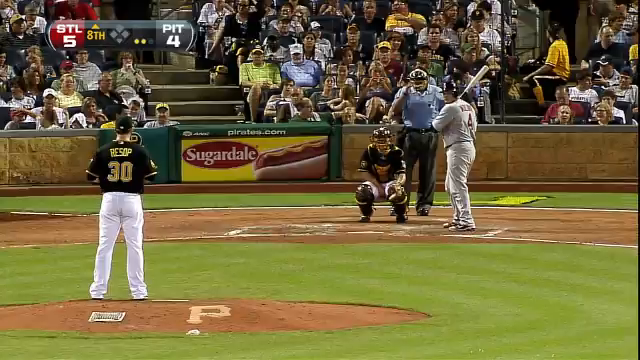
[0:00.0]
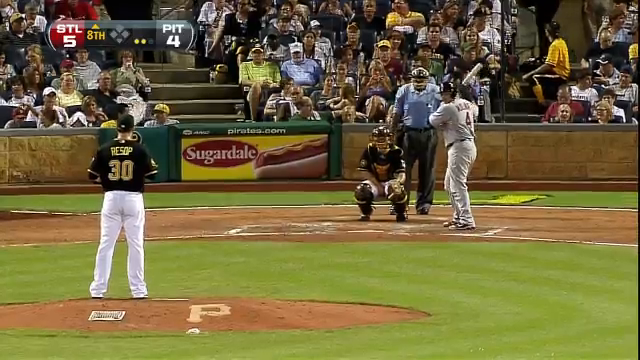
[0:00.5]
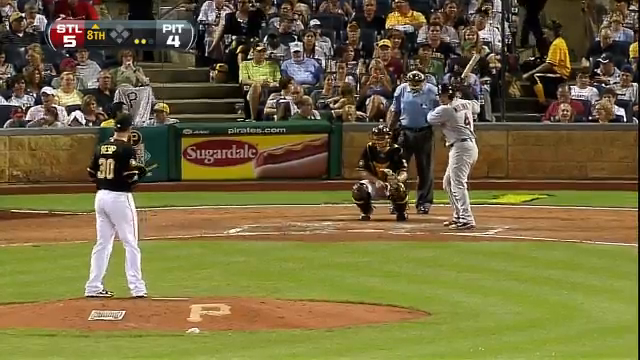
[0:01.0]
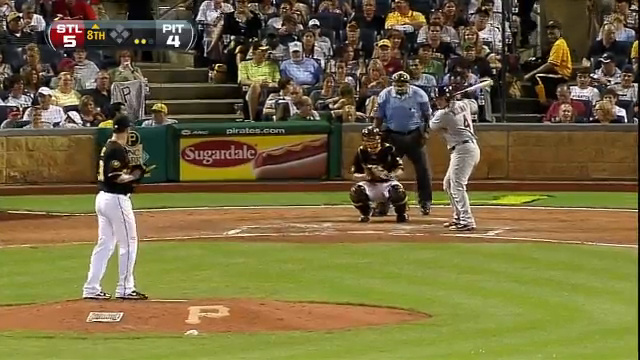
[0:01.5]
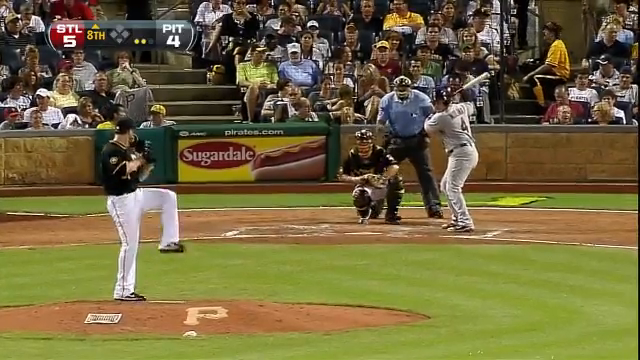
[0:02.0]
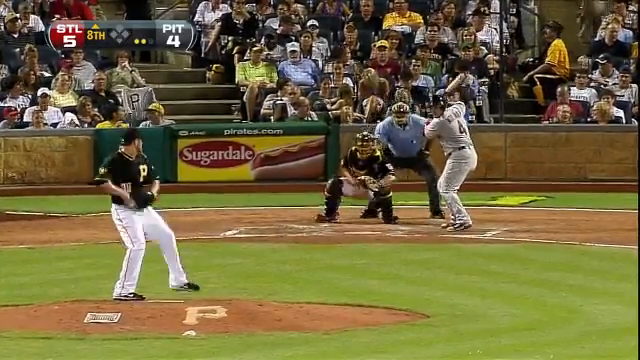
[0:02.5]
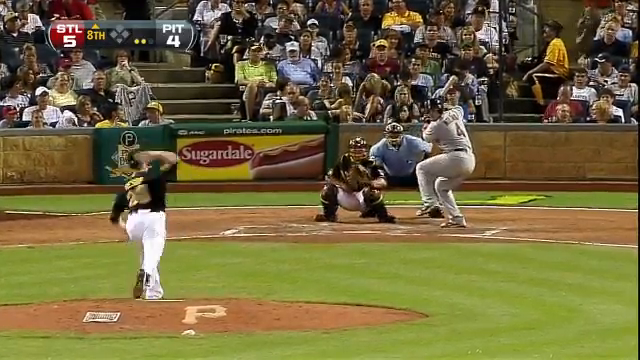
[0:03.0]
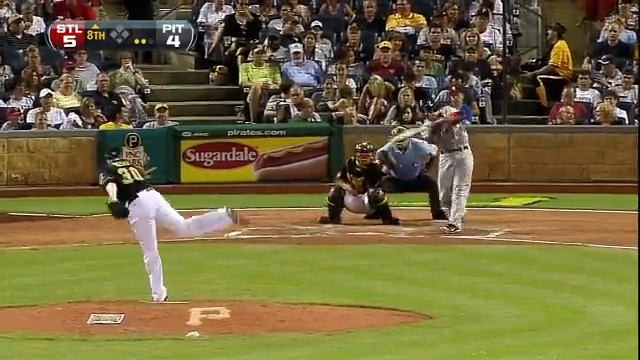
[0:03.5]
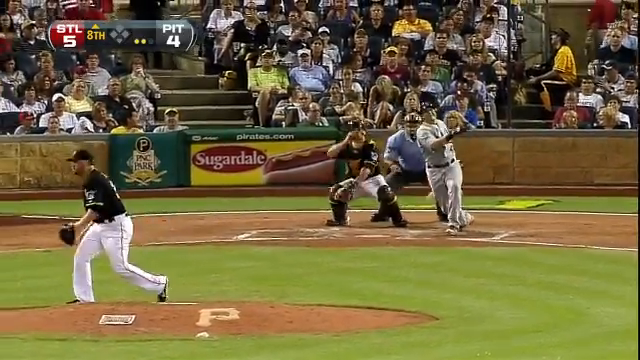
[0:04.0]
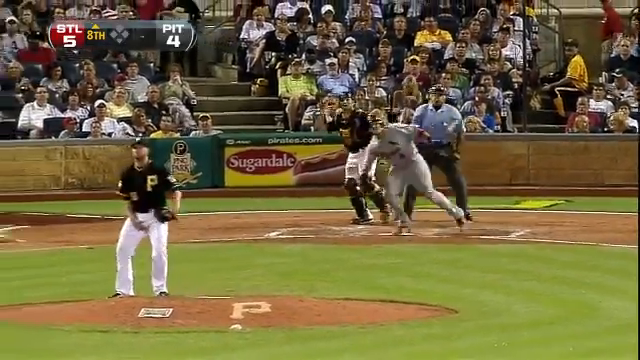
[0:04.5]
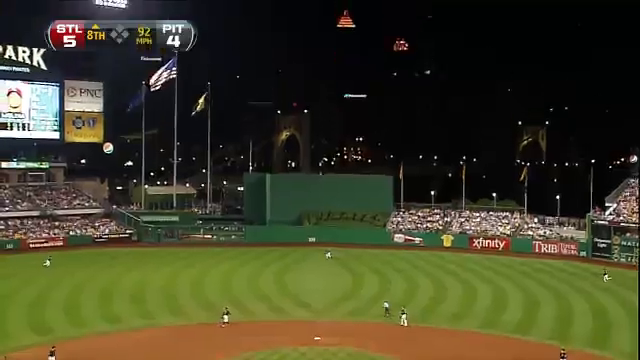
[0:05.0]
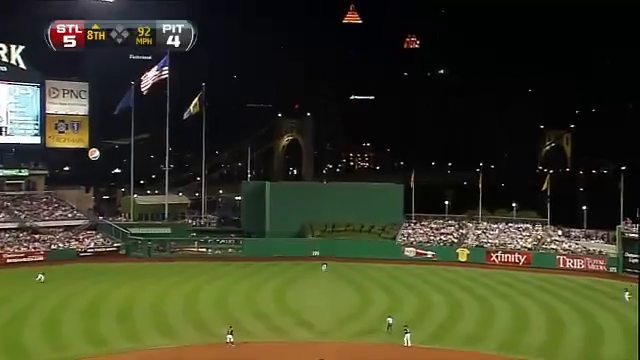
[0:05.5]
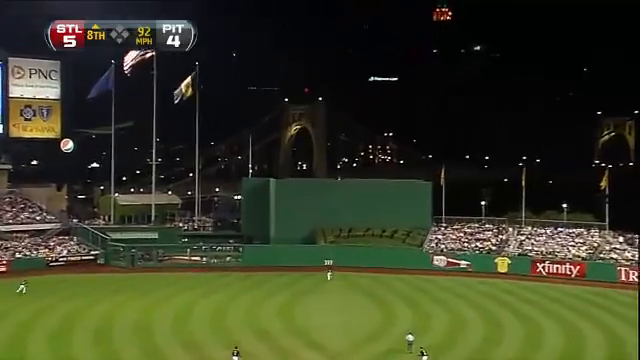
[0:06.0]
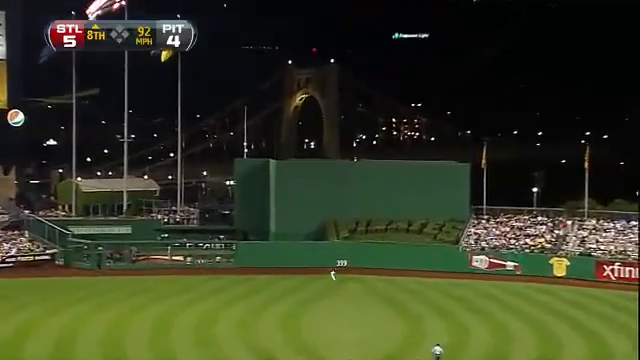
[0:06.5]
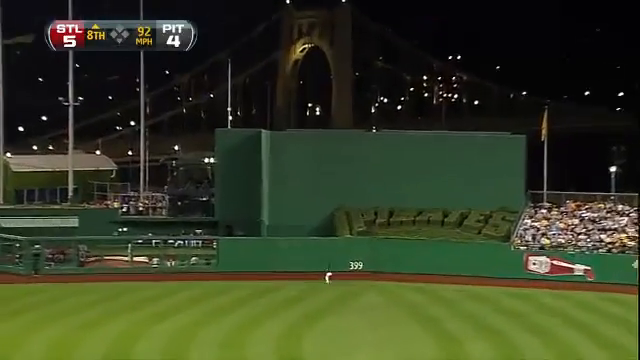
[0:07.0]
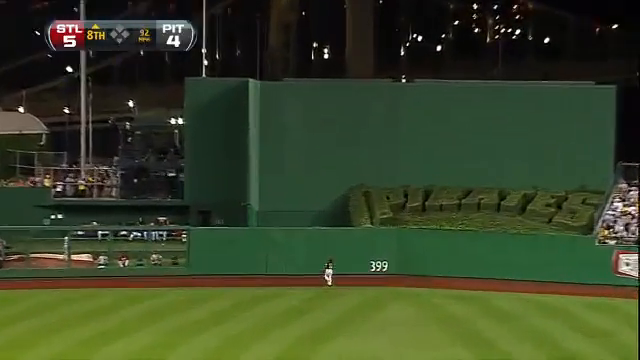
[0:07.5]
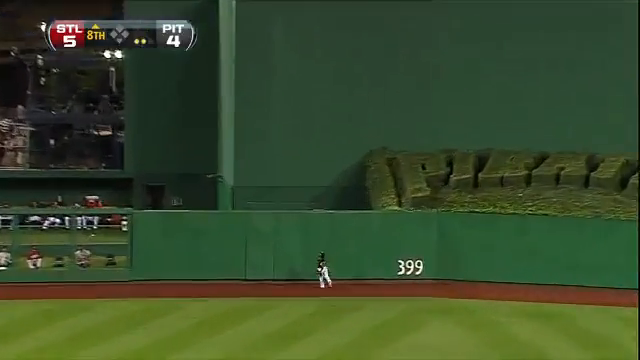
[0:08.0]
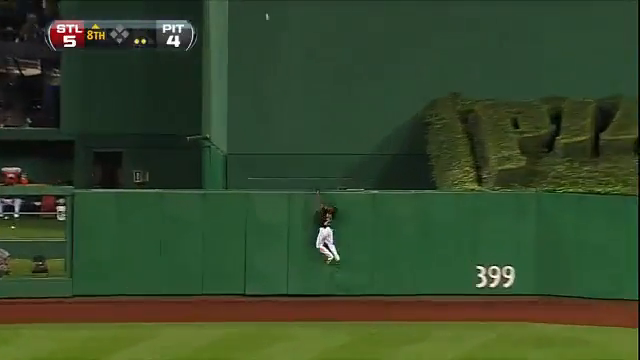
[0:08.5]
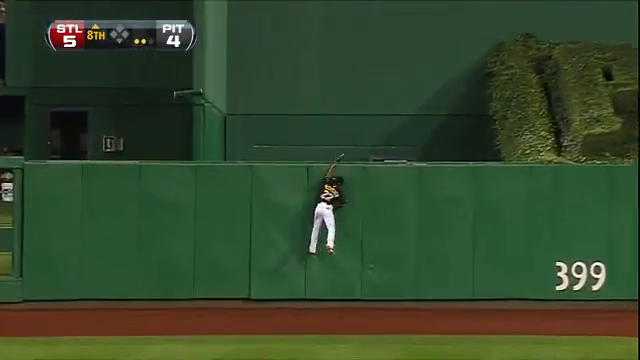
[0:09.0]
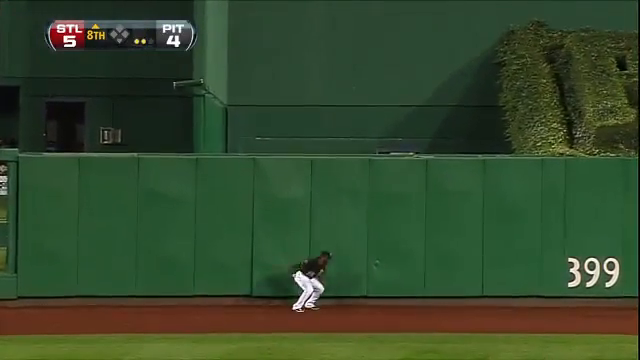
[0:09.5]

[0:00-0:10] On a baseball field, a player in a dark green jersey and white trousers is about to pitch to a batter dressed all in white, who holds the bat with both hands over his right shoulder. Behind the hitter, a man wearing a helmet and a catch pad is crouched down, ready to catch the ball if the hitter misses, and an umpire in a blue t-shirt is standing behind them. The pitcher turns to his side, lifts his left leg, winds back his right arm and fires out the pitch, falling through and twisting his body to his left, lifting his right leg up and out to the side as he throws and falling away to the left. The hitter makes a great connection, hitting the ball high and upwards, and it goes out beyond the green wall at the very back for a home run. A fielder jumps up on the wall, maybe trying to catch the ball before it goes out of play, but it is too high for him to reach.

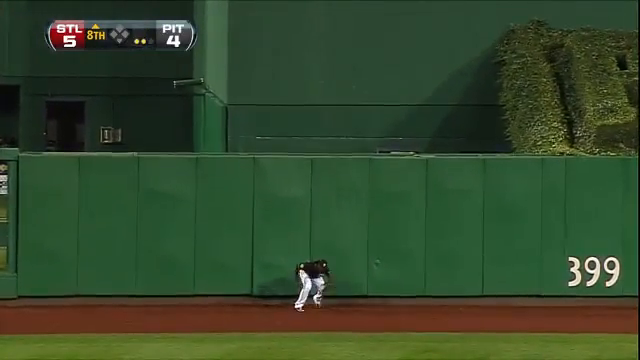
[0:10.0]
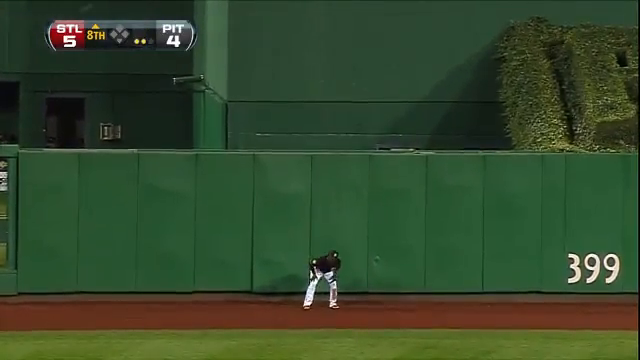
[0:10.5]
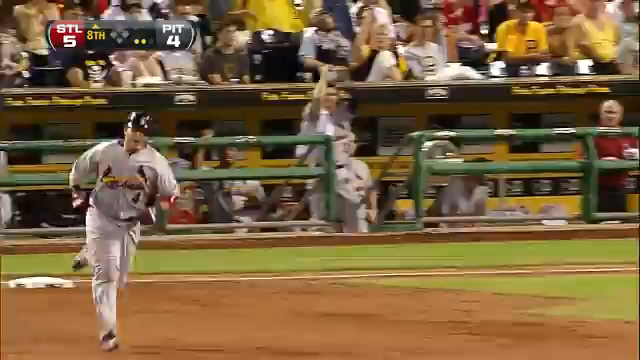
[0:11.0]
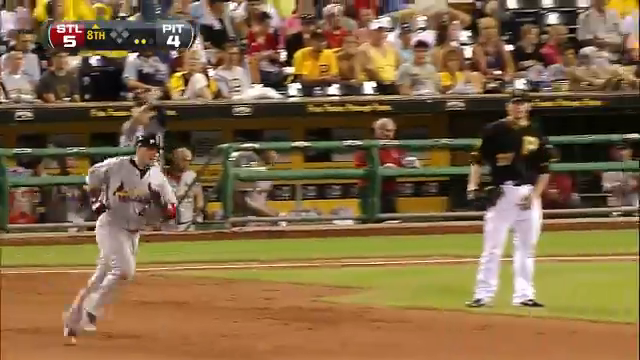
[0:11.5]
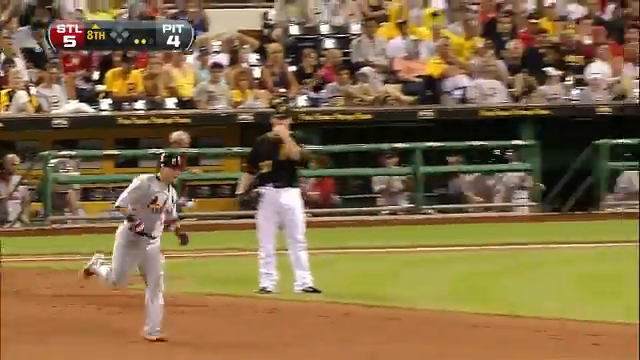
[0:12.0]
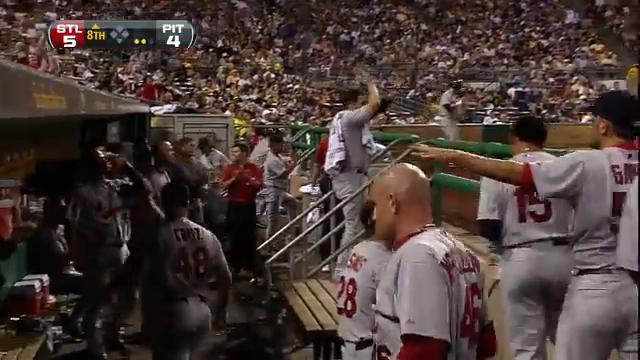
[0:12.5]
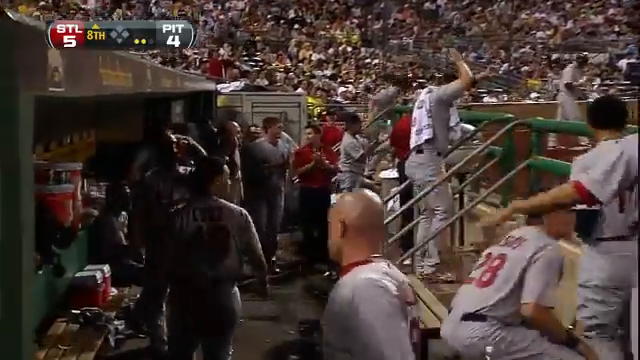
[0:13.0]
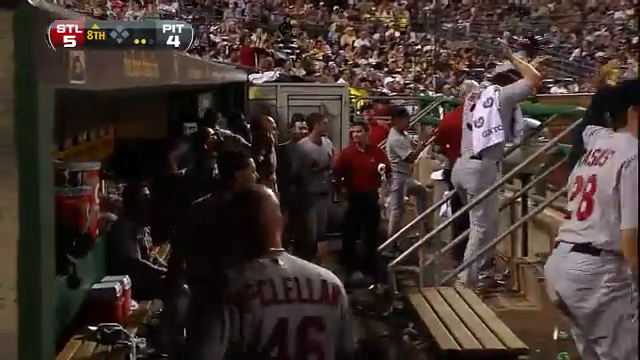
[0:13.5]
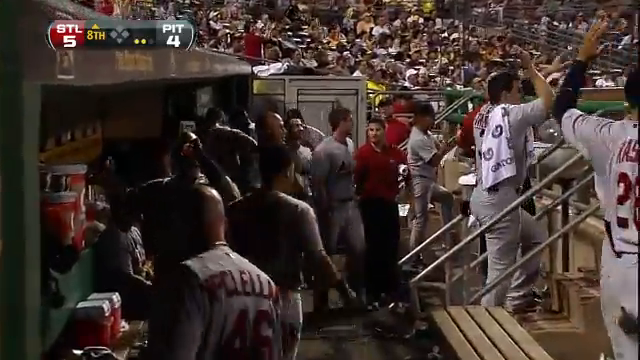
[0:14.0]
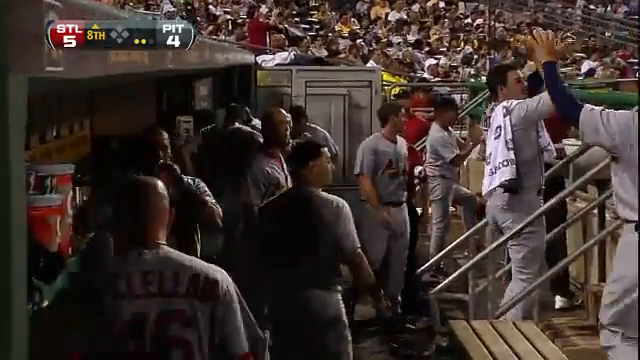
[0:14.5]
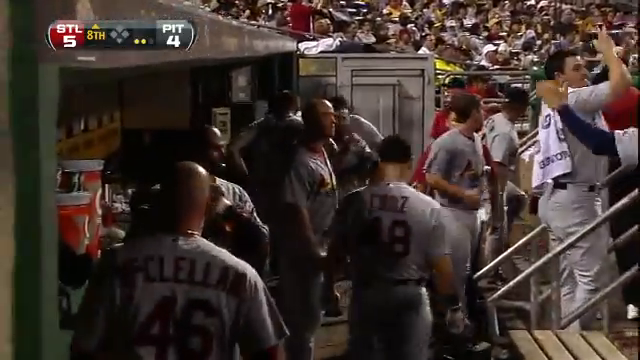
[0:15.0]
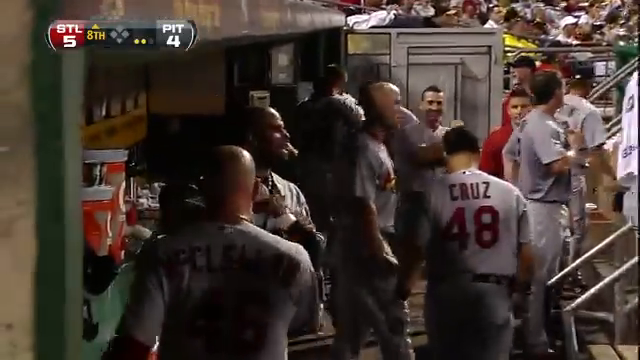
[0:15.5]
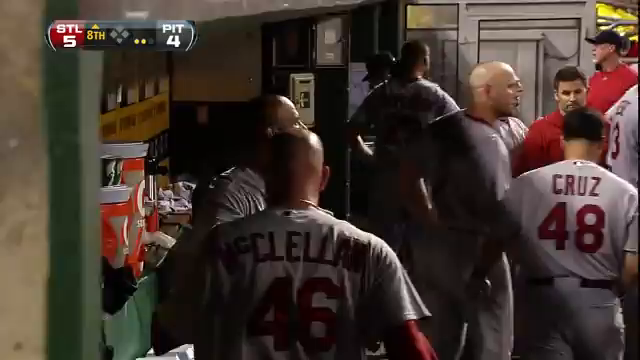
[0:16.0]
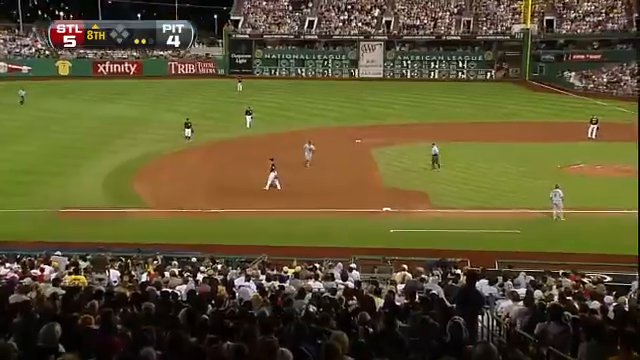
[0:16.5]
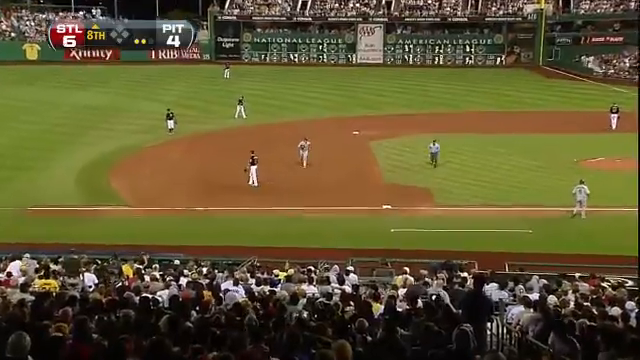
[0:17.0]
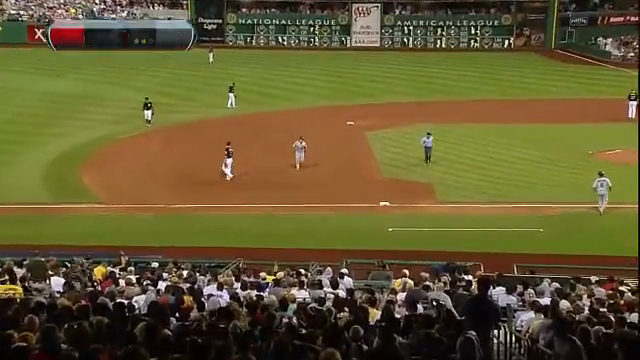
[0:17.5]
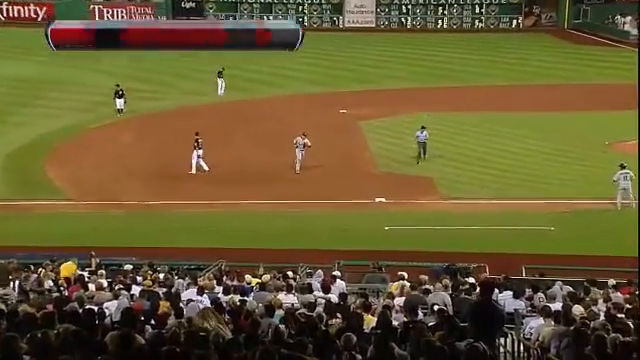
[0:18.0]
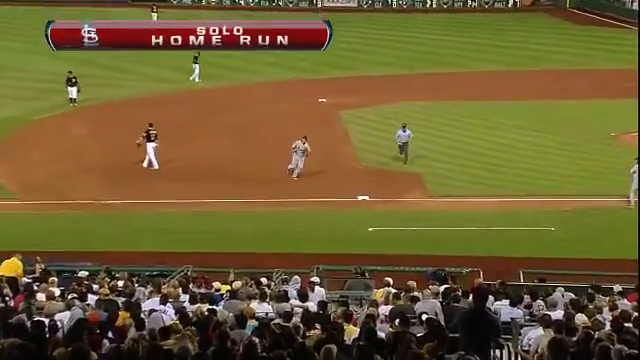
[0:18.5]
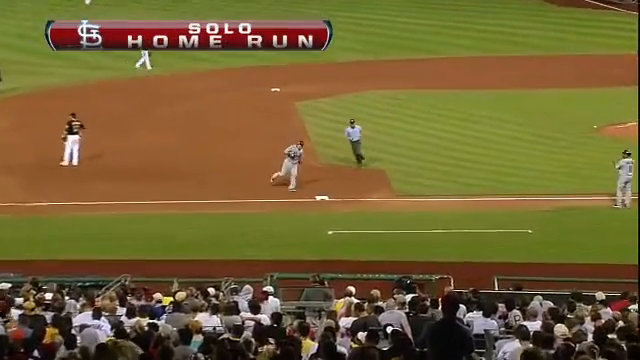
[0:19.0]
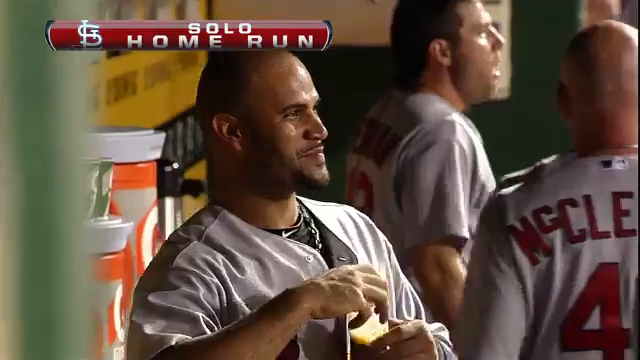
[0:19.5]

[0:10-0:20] The hitter runs the baseline. The view cuts to his teammates in the dugout, cheering, clapping and celebrating, looking very happy. The player who hit the home run runs toward third base and rounds it to complete his home run. In the dugout, at least 10 or 11 teammates are in the background, standing and walking to and fro. Two in the front are cheering and clapping, and one teammate at the back left, with water in his hand, says something quite aggressively, moving his head forward quite fast in celebration. A red text box then appears at the top reading "Home Solo Run".